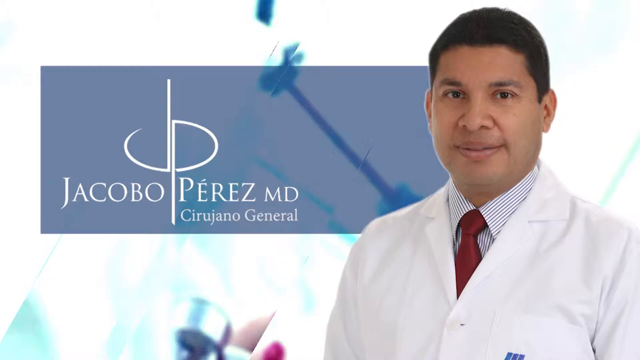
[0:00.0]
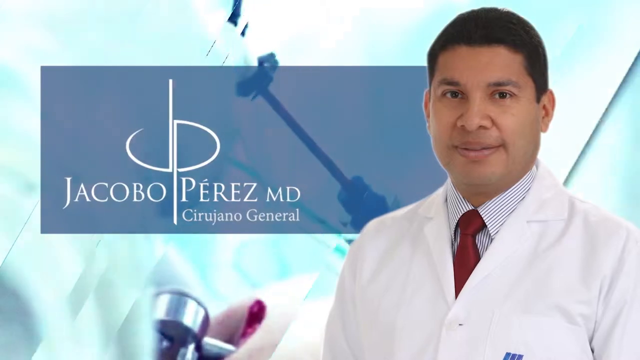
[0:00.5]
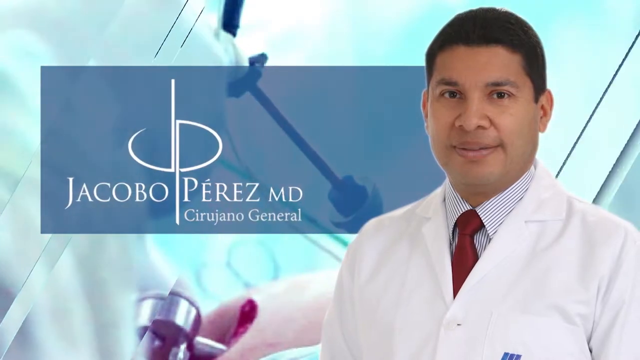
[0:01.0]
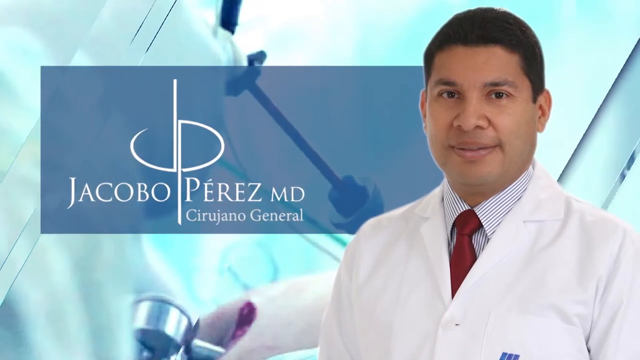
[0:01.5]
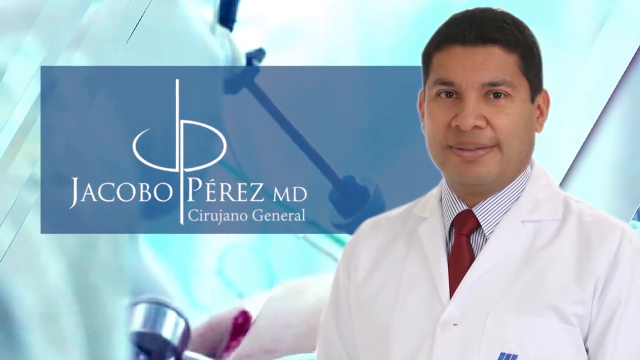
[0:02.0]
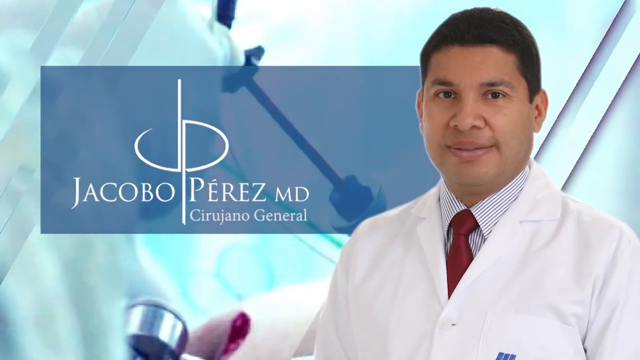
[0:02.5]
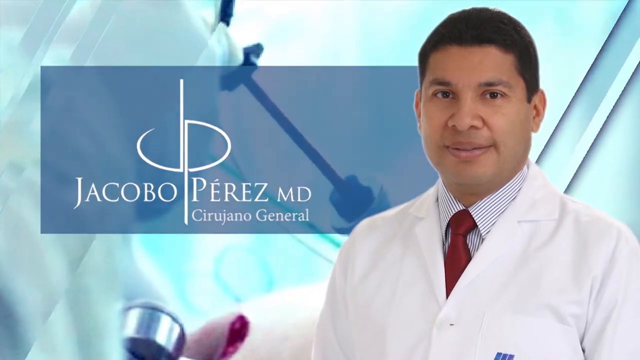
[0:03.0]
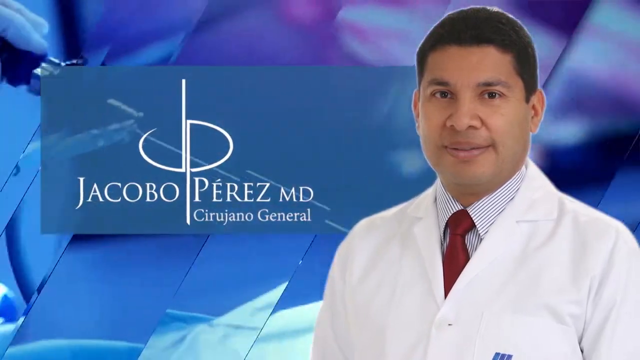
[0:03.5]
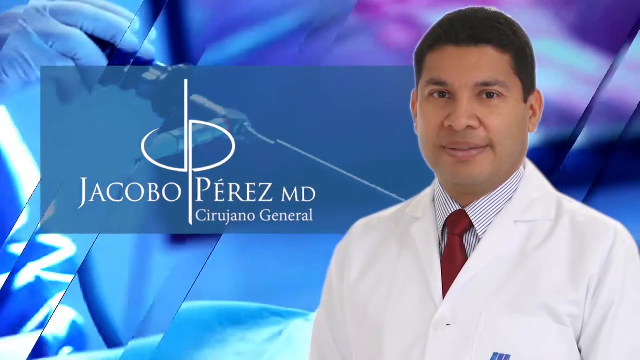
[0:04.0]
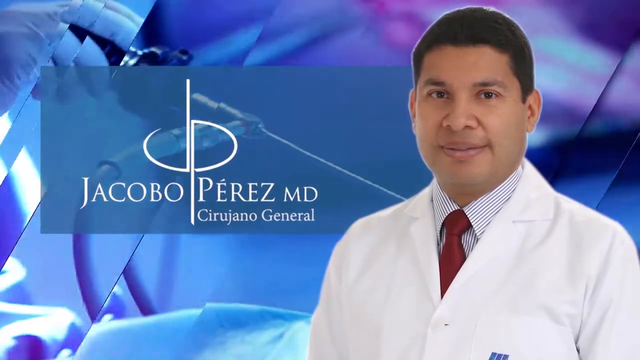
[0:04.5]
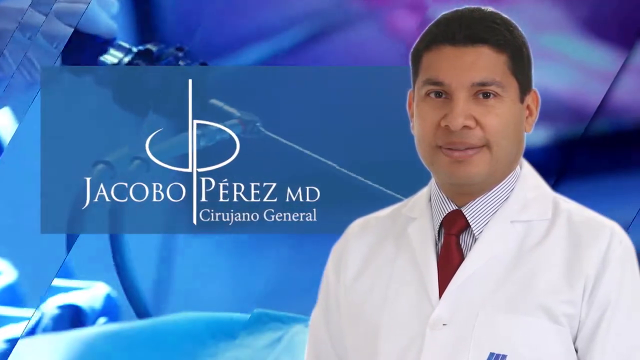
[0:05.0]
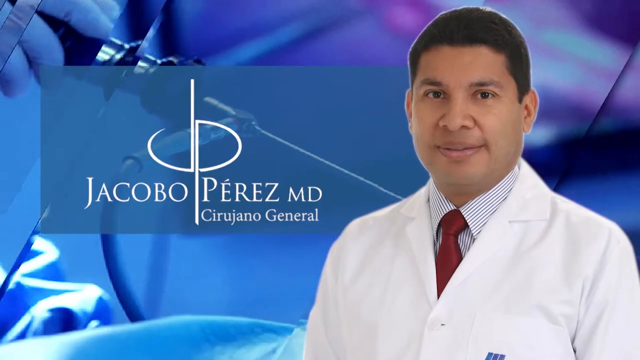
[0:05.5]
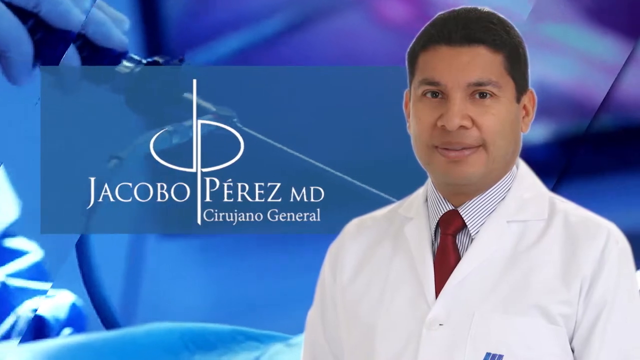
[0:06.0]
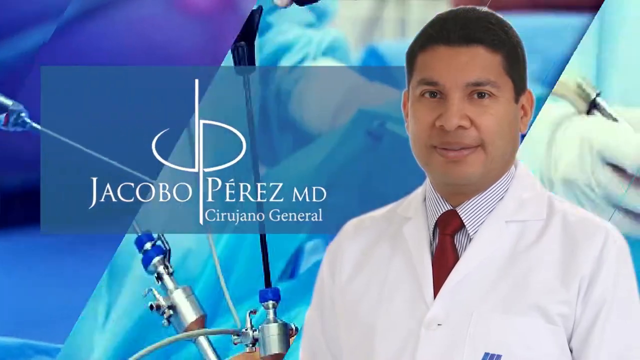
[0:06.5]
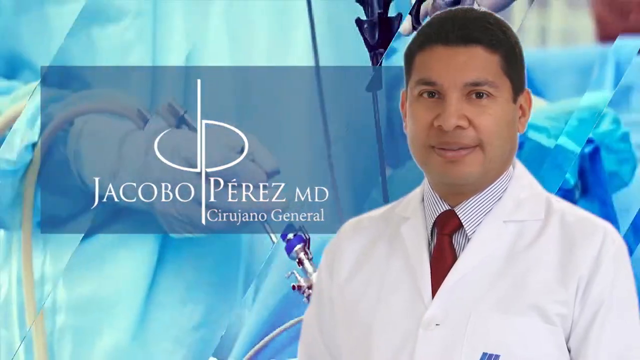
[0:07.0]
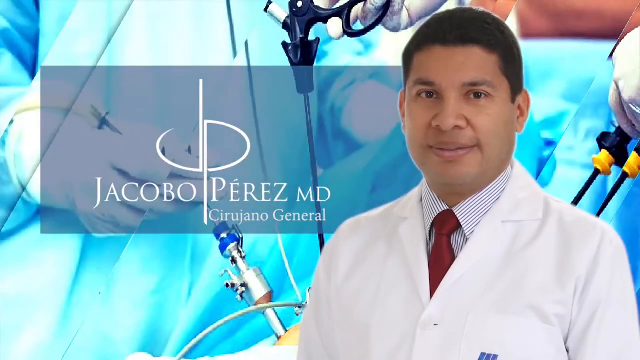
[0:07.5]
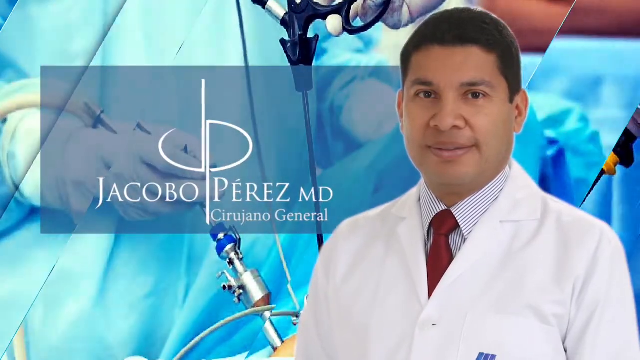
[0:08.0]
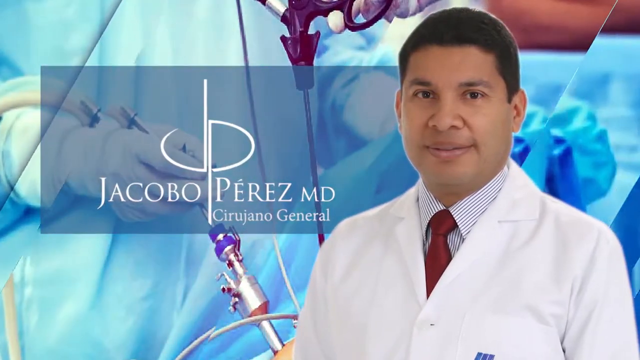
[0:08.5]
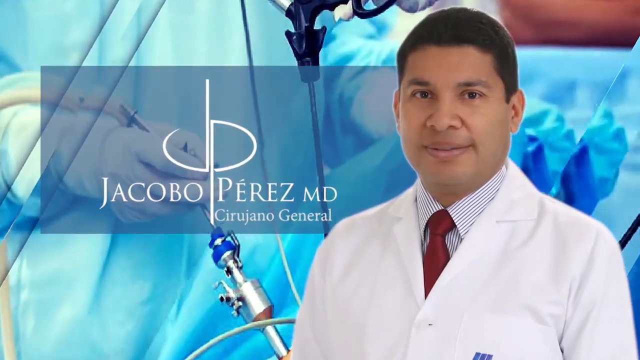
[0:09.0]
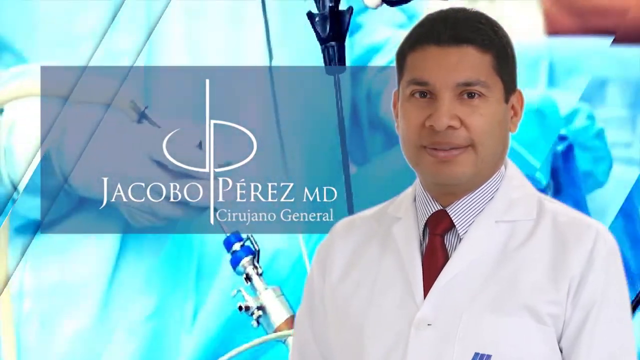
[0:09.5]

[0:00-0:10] The main subject is a single man who appears to be a white doctor. He wears a white doctor's gown over a shirt and a red tie, and he looks formal, neat, professional and presentable. He has black hair and is clean and nicely shaved. The setting looks like a hospital. On-screen text reads "Jacobo Perez, MD".